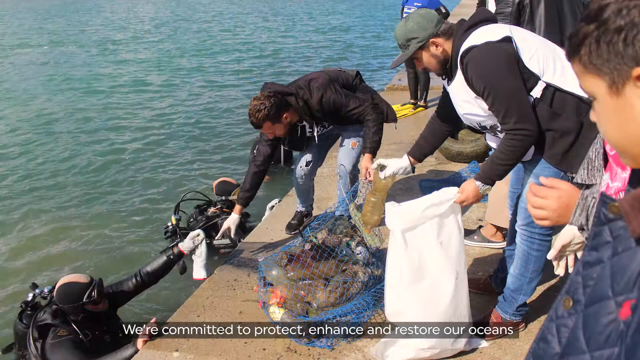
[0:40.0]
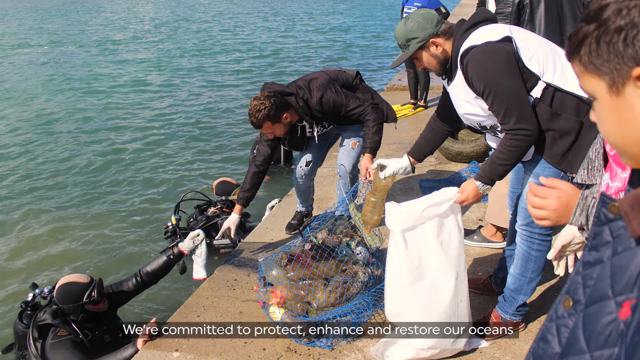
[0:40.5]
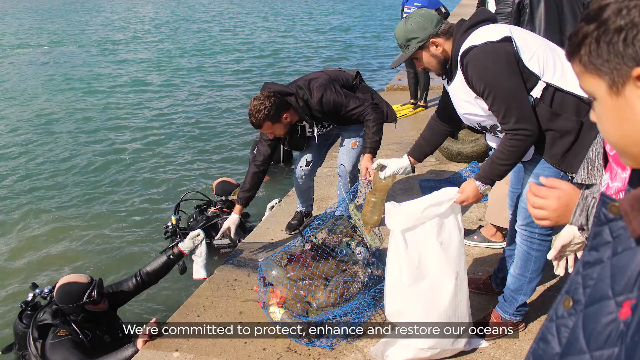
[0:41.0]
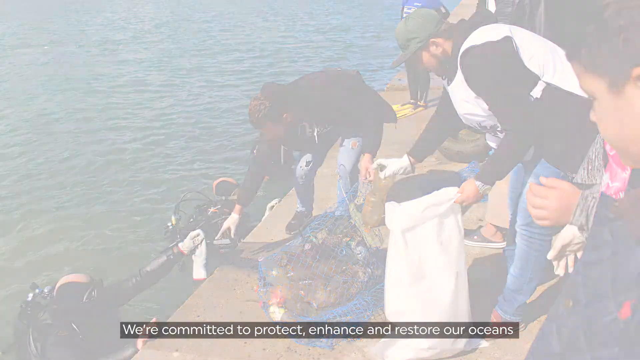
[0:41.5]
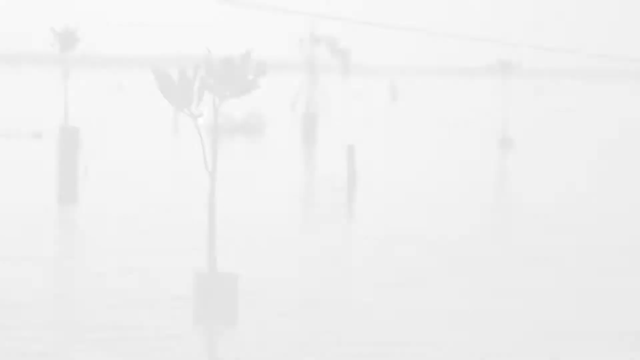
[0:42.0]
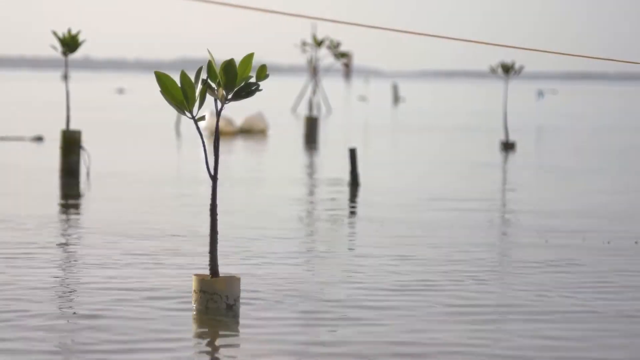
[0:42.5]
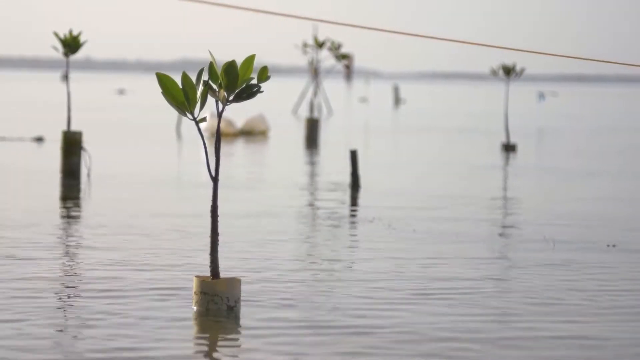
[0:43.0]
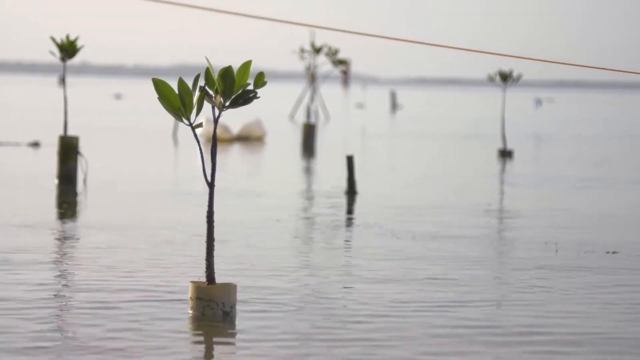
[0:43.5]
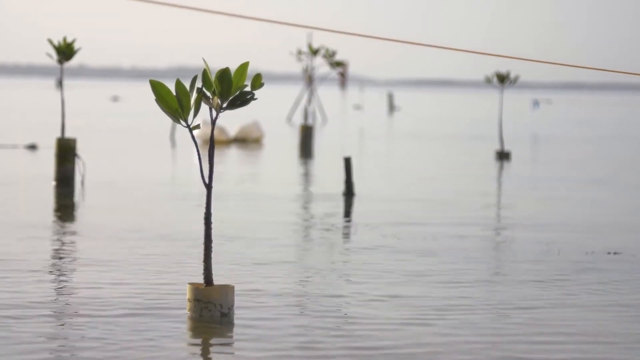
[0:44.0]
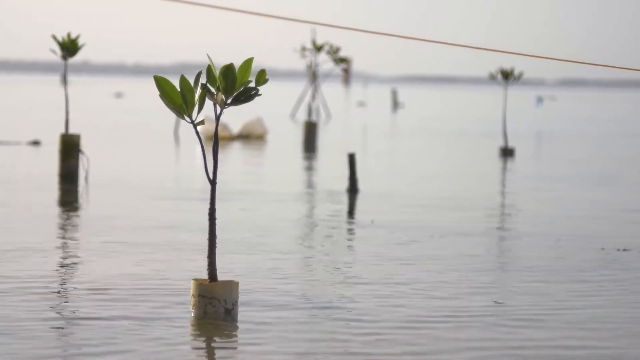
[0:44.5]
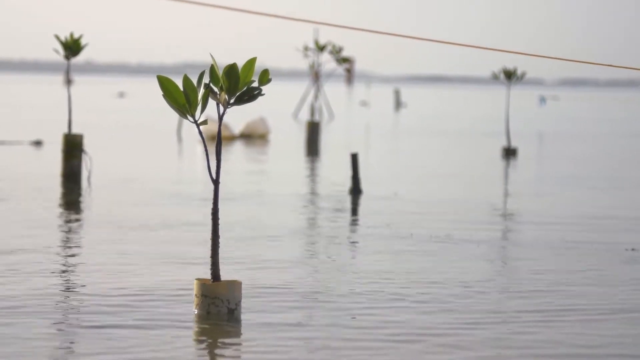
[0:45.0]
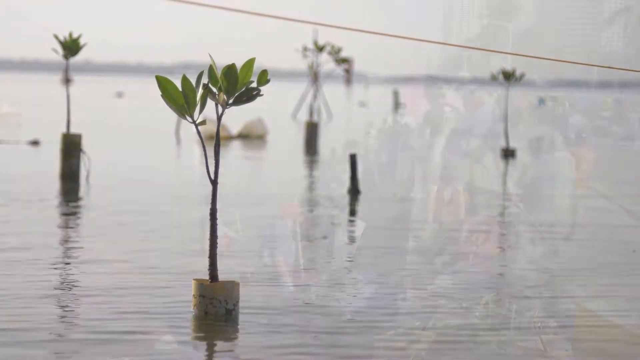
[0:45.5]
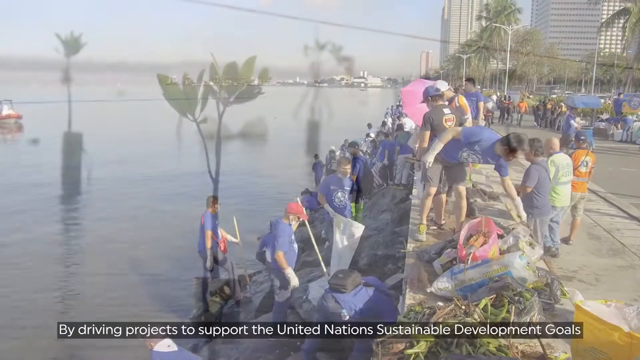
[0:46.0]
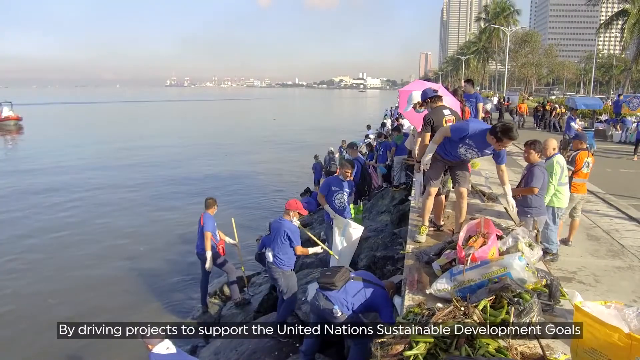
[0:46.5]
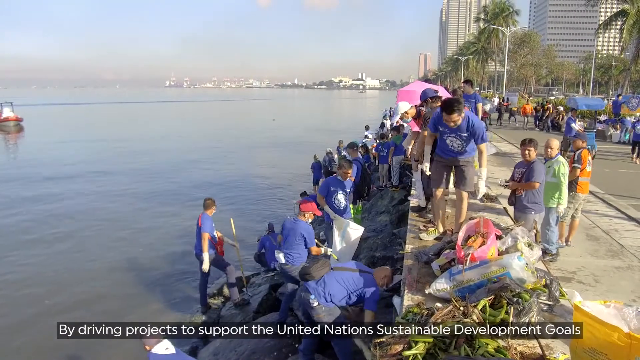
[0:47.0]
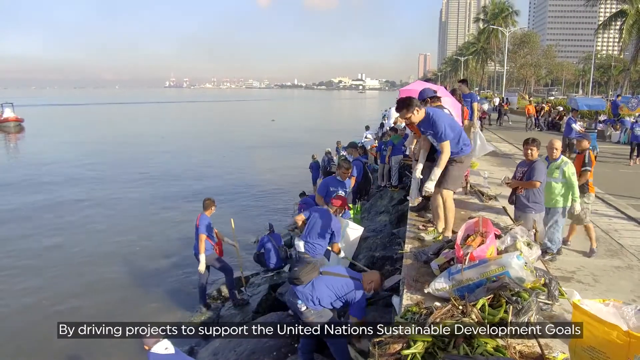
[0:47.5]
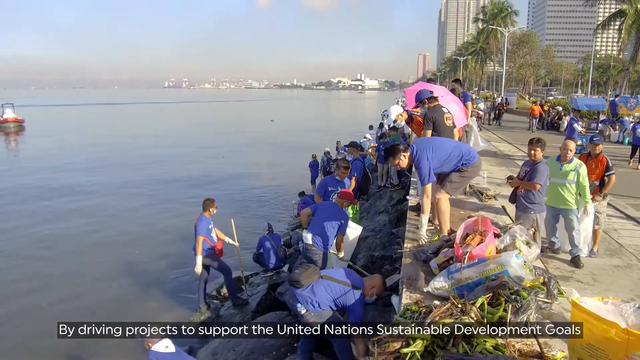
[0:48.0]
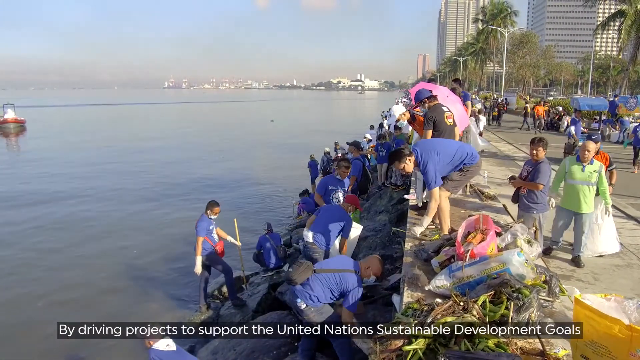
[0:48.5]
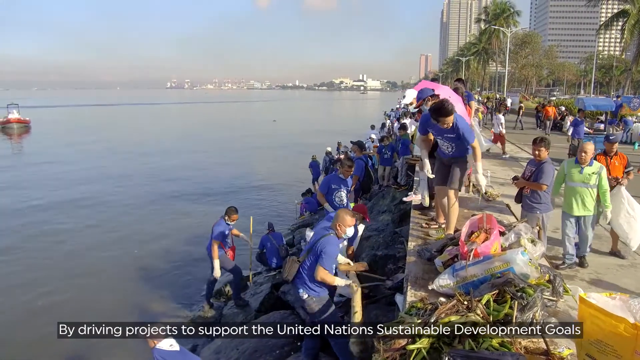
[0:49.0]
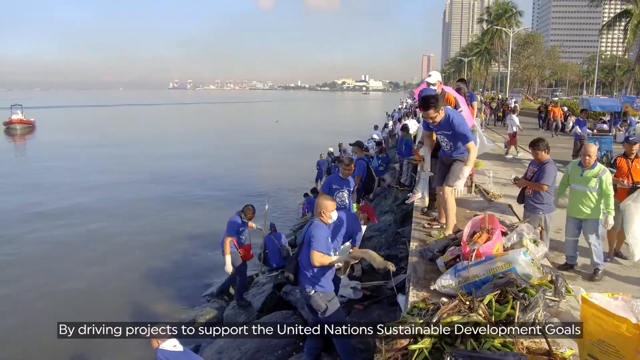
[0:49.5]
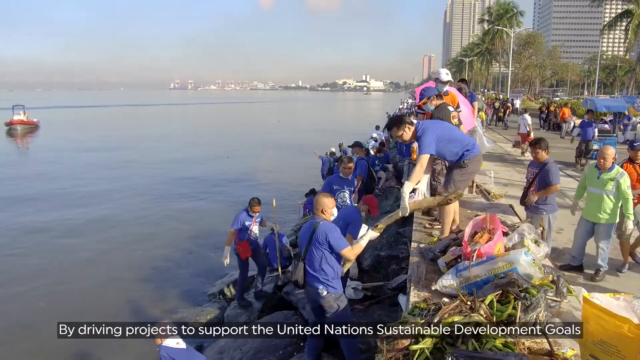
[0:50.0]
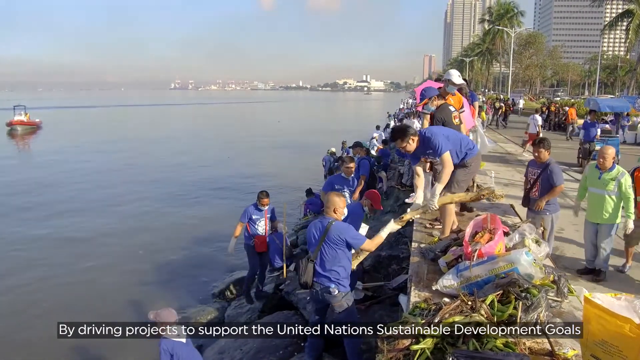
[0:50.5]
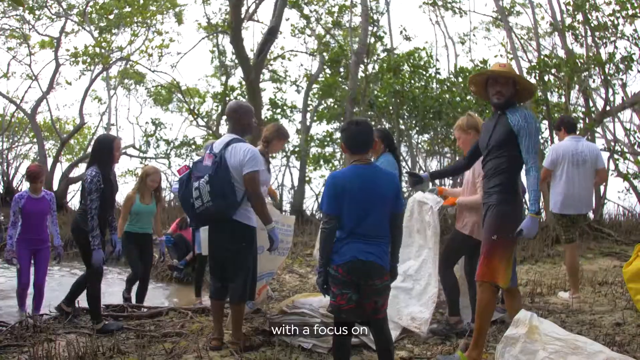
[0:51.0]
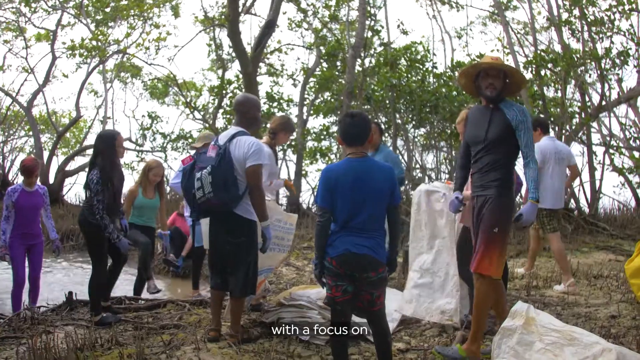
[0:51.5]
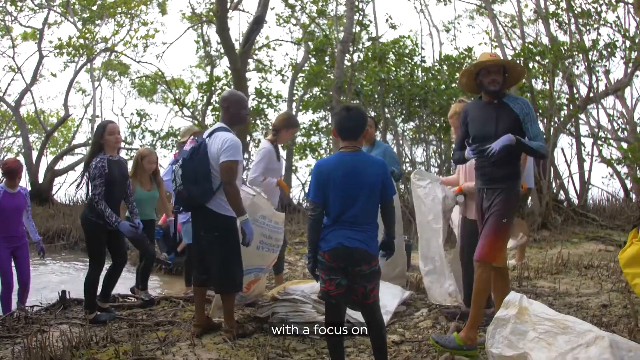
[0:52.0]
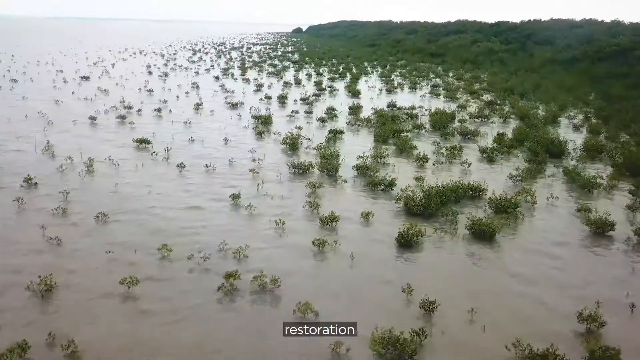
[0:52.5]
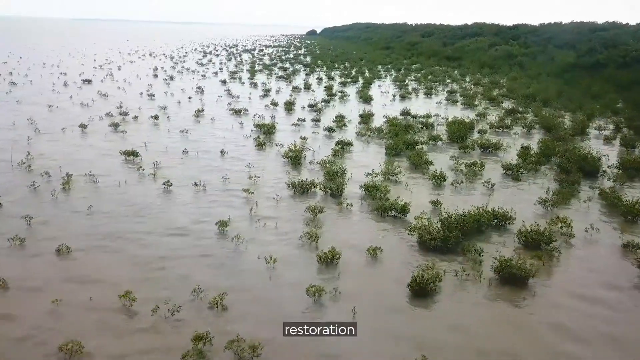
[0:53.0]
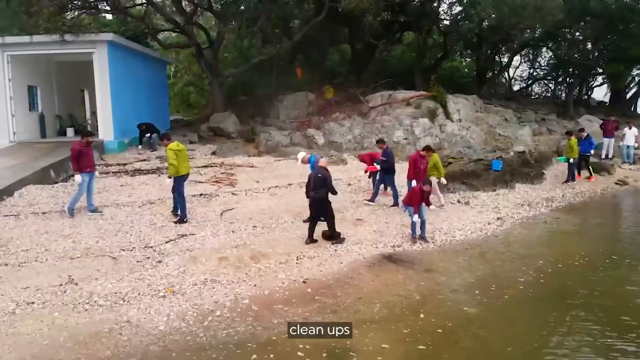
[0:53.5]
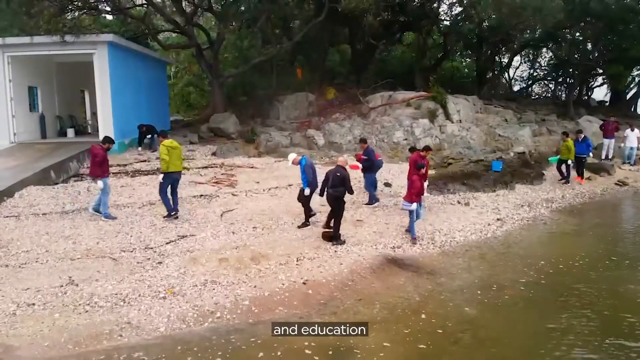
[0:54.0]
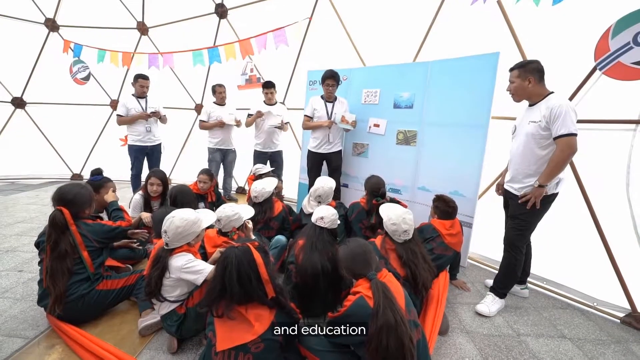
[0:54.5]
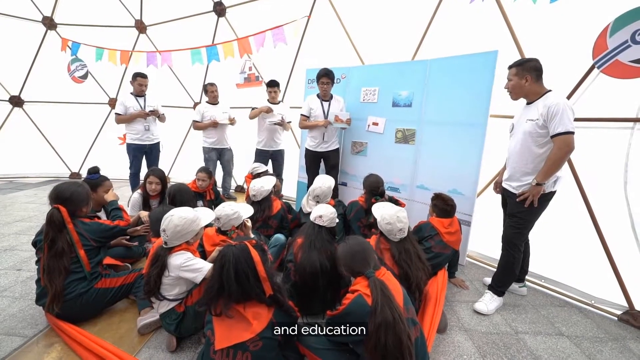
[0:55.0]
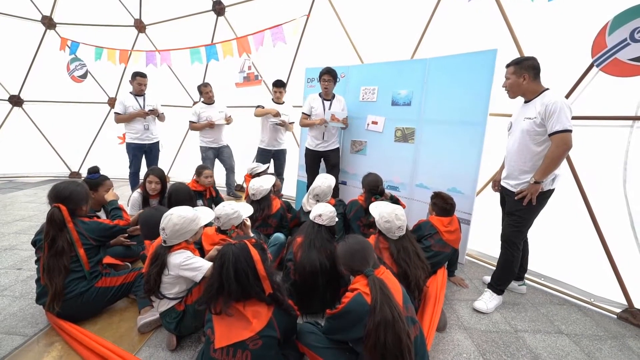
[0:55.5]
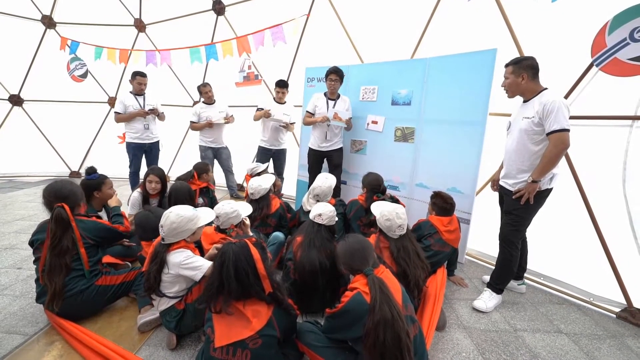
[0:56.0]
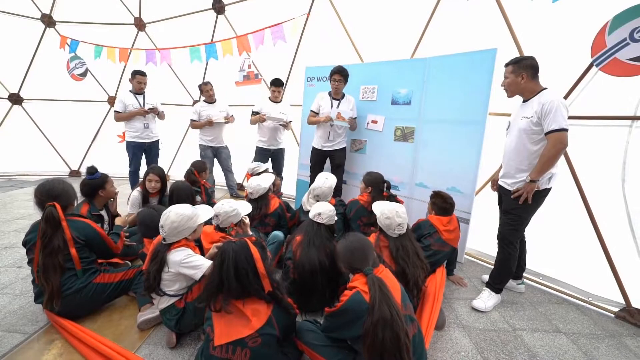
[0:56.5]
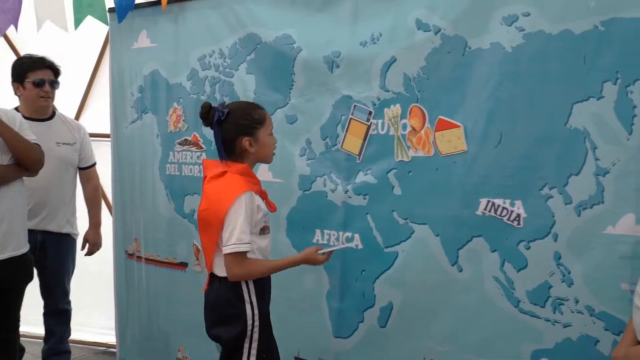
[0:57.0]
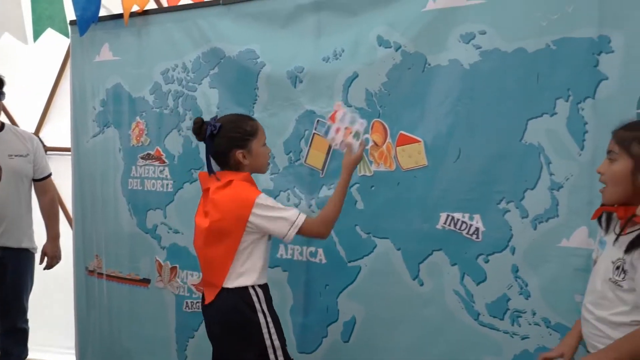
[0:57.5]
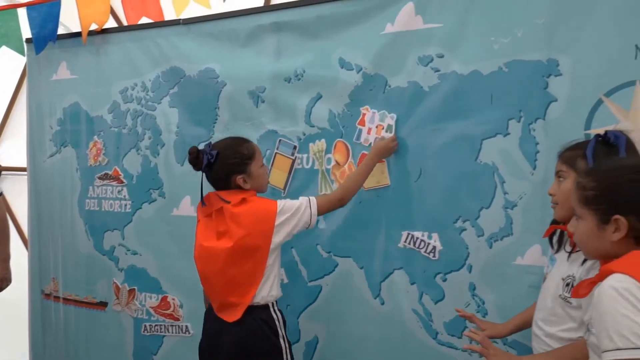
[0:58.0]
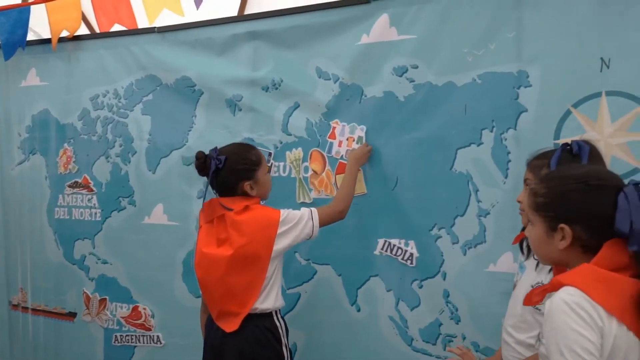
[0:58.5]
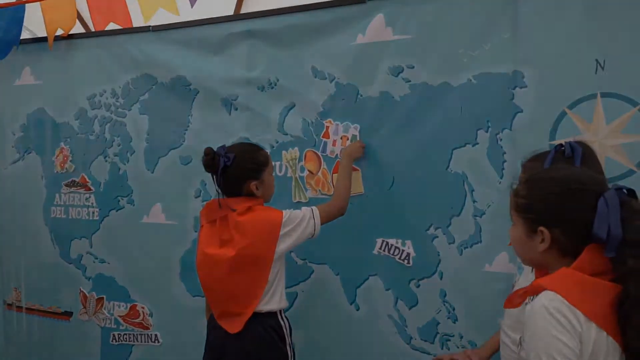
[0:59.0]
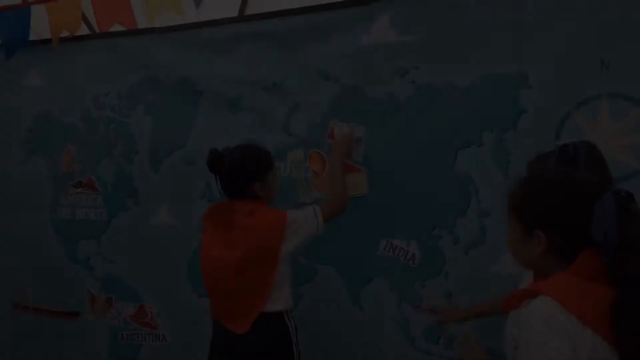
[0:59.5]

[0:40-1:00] The diver hands something to a person in the centre of the screen who wears gloves and reaches down with their right hand to pick it up. Another person bends down with a sack, picking up things that have been put onto the dock. The scene changes to moving footage of water plants growing in the water from tubes, seemingly some sort of hydroponica. Then the docks are shown crowded with too many people to count; some are in the water and some are on the dock, bending down to collect what the people in the water pass to them. A large piece of wood is passed between someone bending over and someone standing in the water, both side-on to the camera, with the dock on the right side. The scene switches briefly to a group of children, then to the plants on the water, then to a sandy beach where about 12 adults appear to be searching for something. Next, a group of children sit inside a domed structure with coloured flags strung between some of the domes and a blue background with posters. Four people stand before the children, with one more off to the right; the four appear to move their arms and hold up some sort of picture. A little girl walks to a large screen showing India and America and puts a picture up, probably where Eastern Europe or Russia would be.